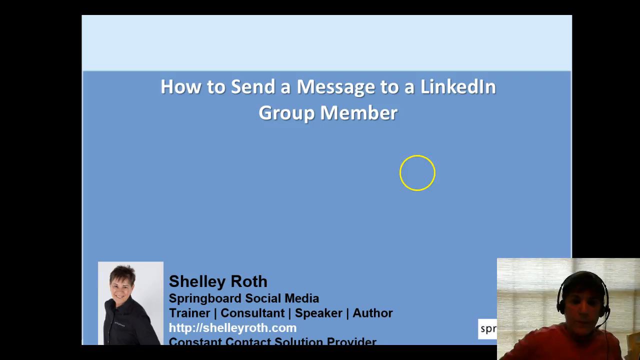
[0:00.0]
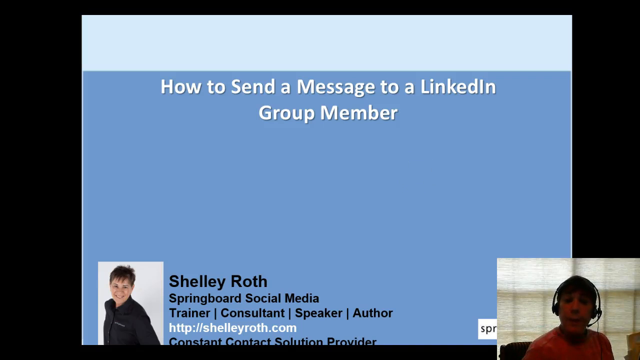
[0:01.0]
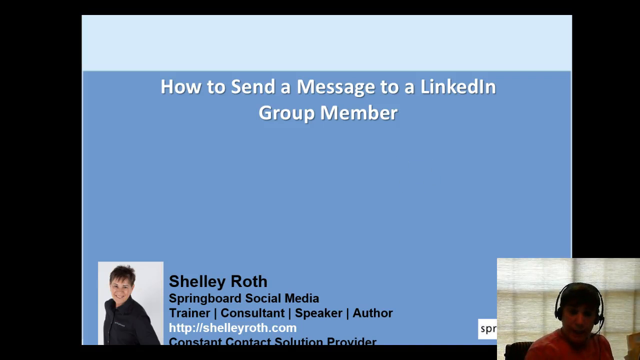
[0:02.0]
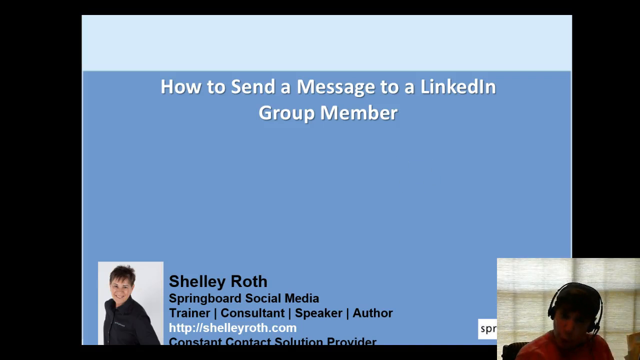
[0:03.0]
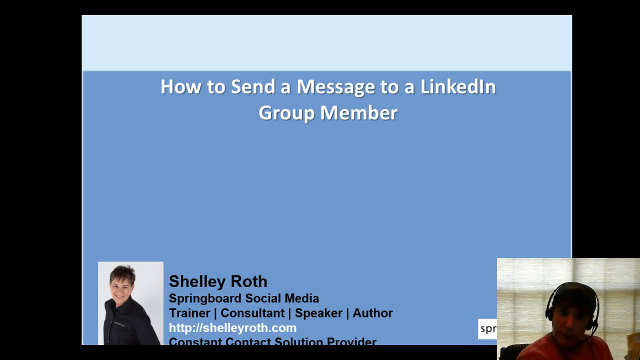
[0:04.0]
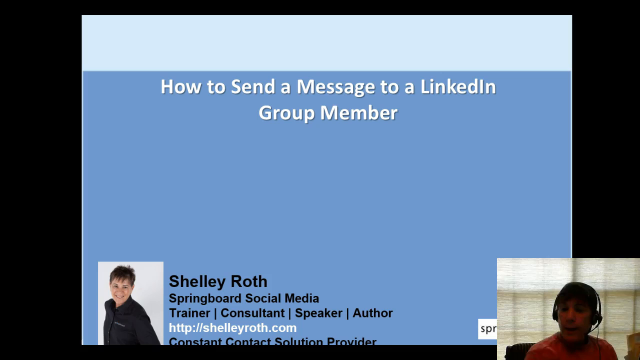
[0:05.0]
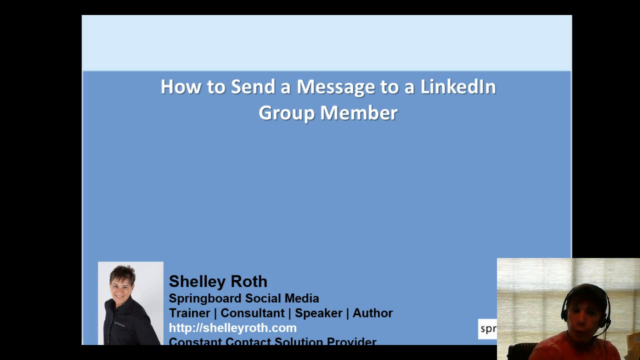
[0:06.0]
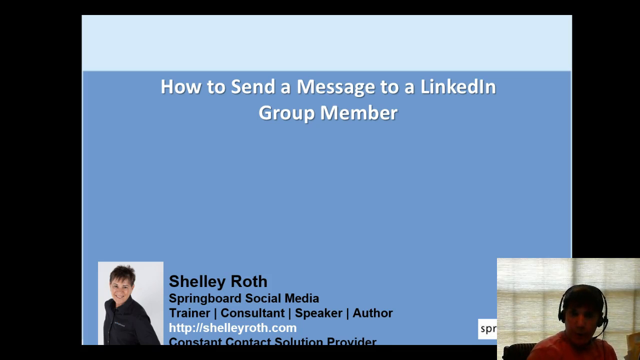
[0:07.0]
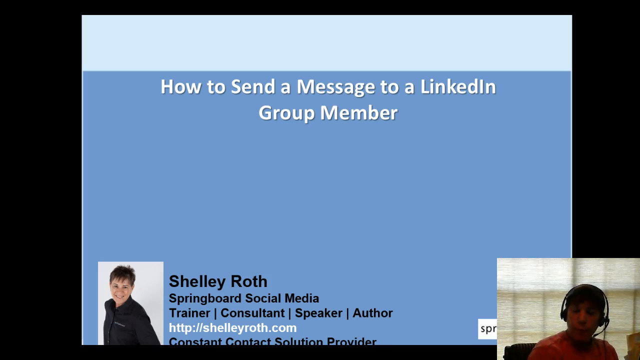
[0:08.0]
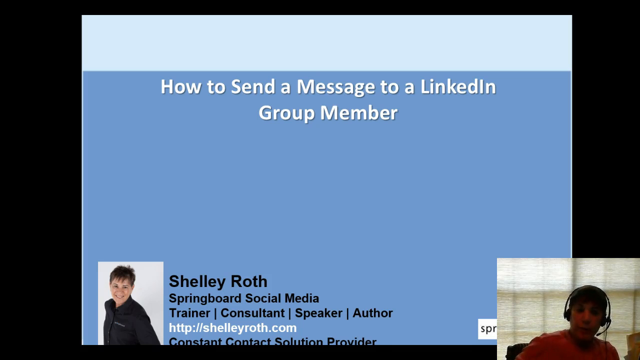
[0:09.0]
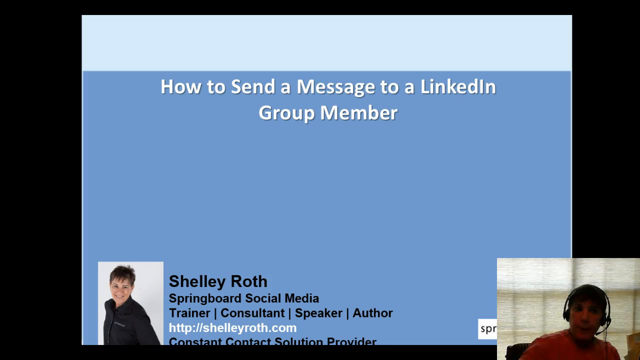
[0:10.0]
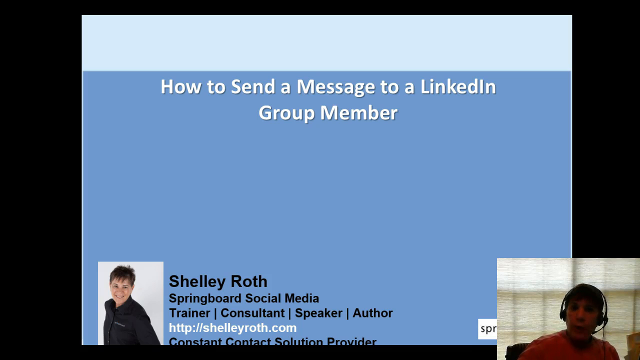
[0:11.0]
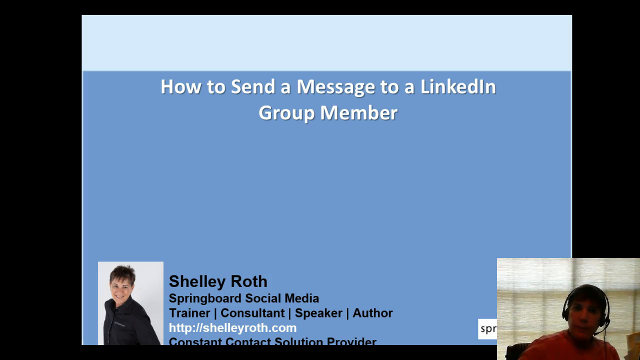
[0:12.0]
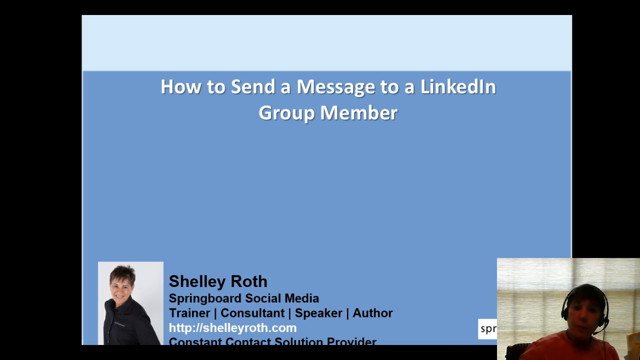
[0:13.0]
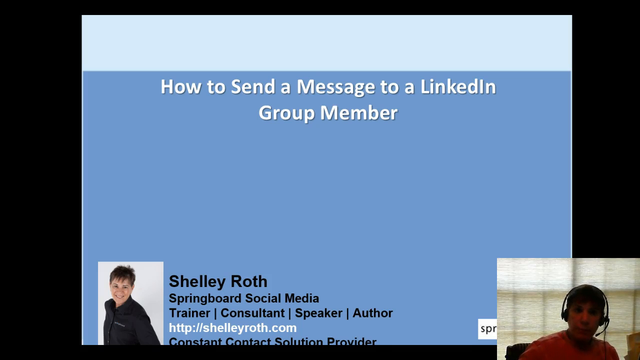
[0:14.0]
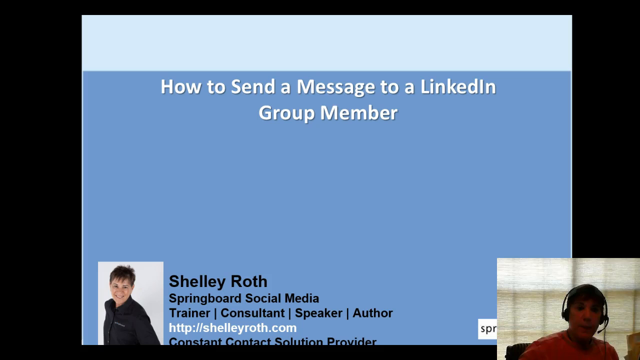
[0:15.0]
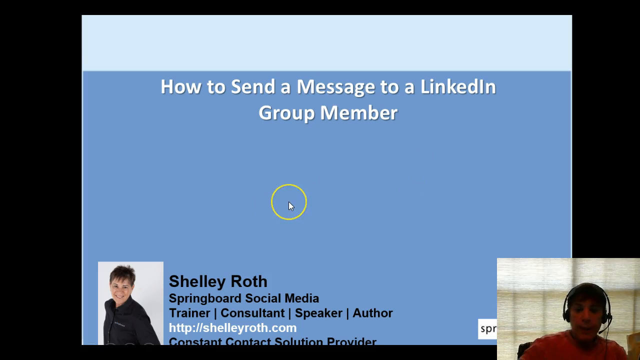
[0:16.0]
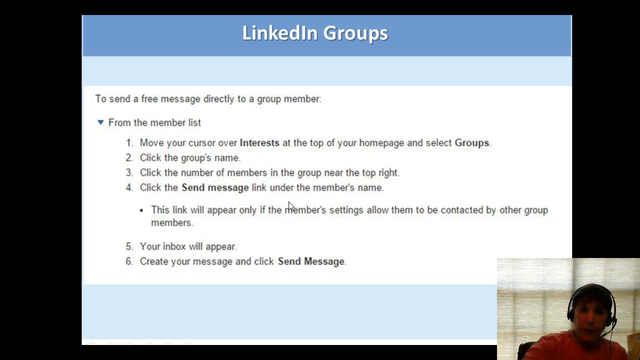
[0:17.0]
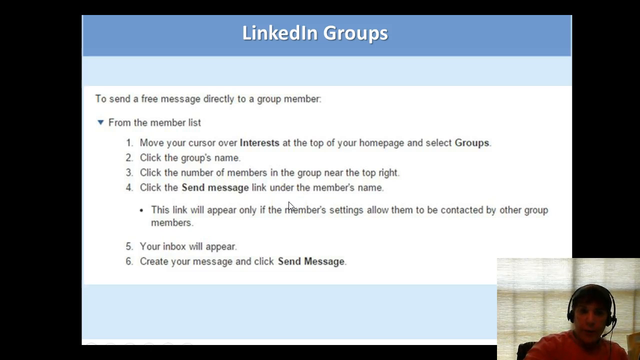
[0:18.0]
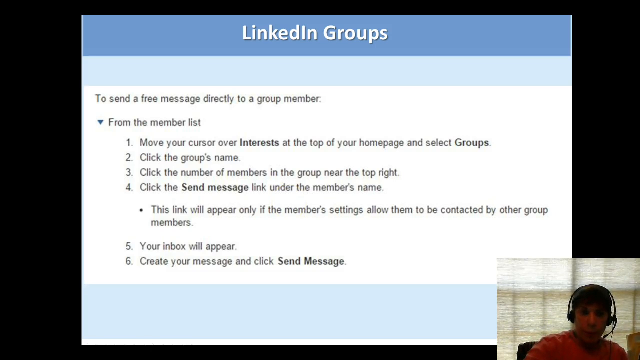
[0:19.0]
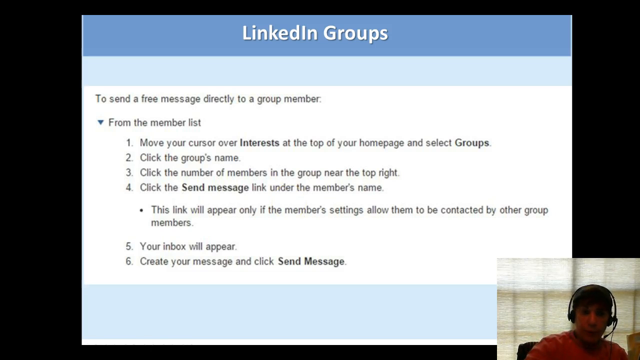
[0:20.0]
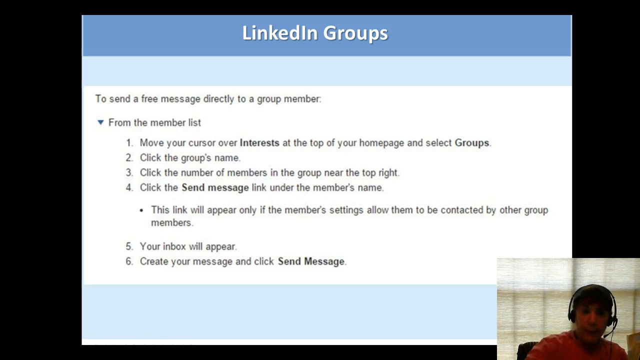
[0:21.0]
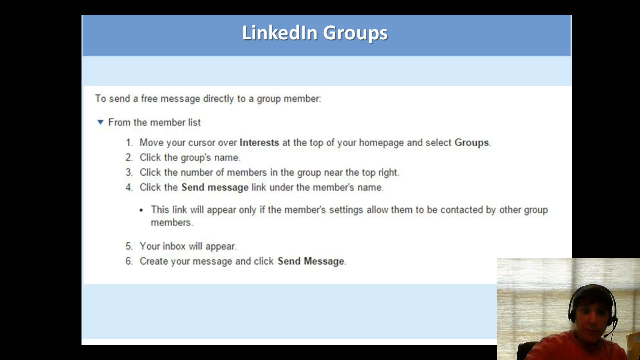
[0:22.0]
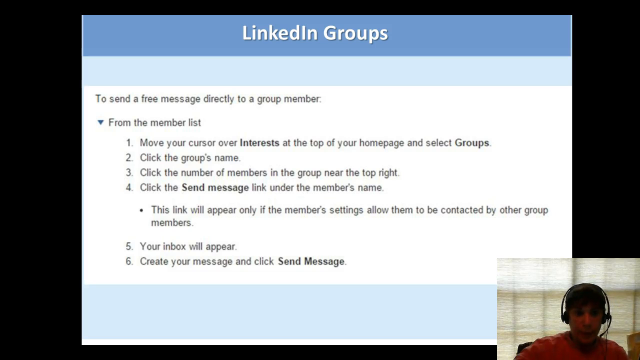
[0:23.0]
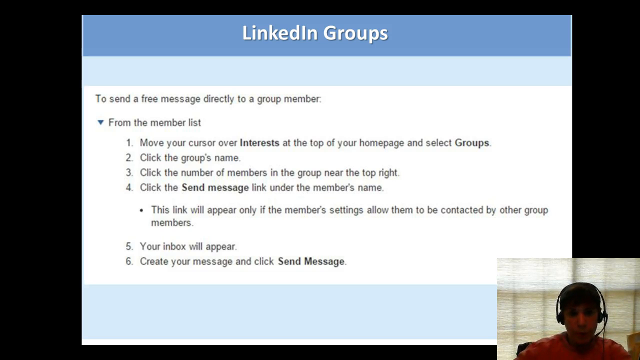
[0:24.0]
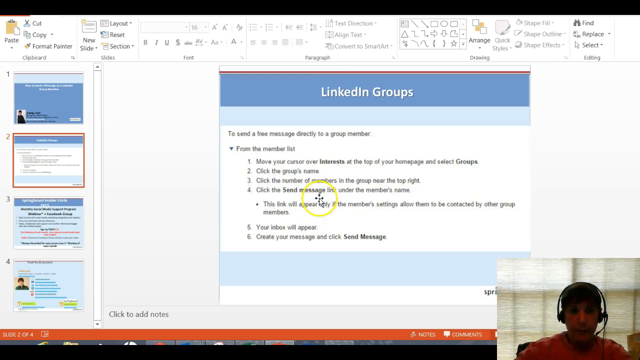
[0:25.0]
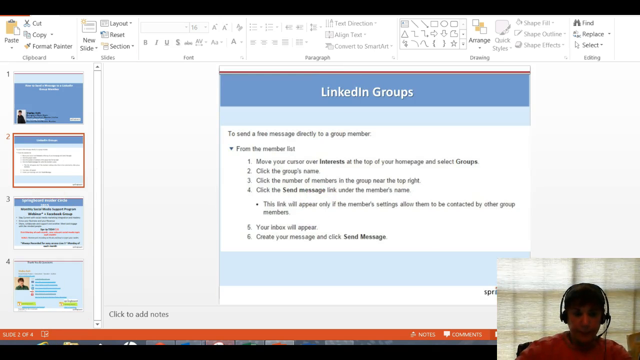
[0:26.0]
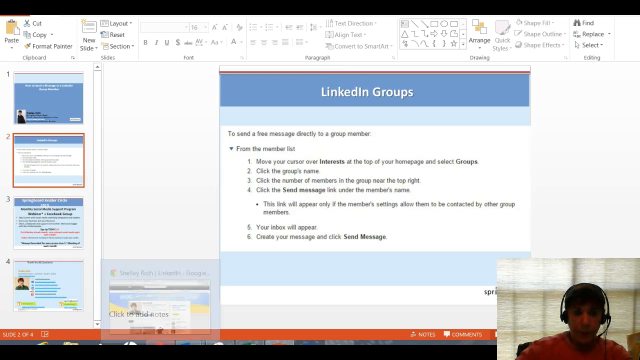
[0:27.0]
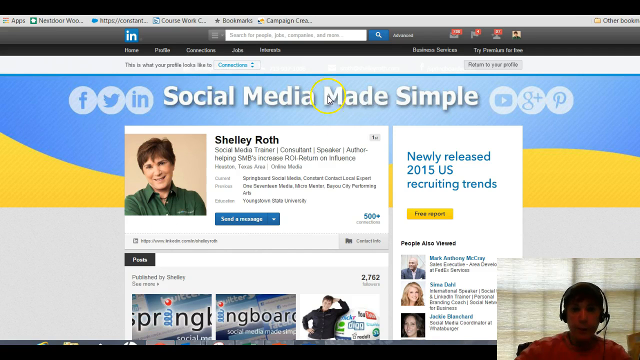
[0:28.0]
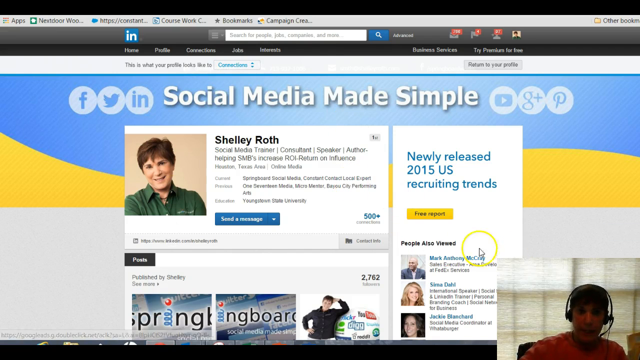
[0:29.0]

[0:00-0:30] A slide with a blue background carries the text "how to send a message to a LinkedIn group member." In the very bottom left is a photo of a young person, with text next to it that reads "Shelly Roth Springboard Social Media. Trainer, consultant, speaker, author. http://shellyroth.com. Constant contact solution provider." In the bottom right corner is a webcam view of a person wearing a black cap with a headset and a microphone attached to the headset, and an orange shirt. Behind them is a large paned window covered with a gray curtain. They talk toward the webcam recording them and move their mouse cursor, a yellow pointer surrounded by a yellow circle, so that it appears on the slide. The video then cuts to a new slide.